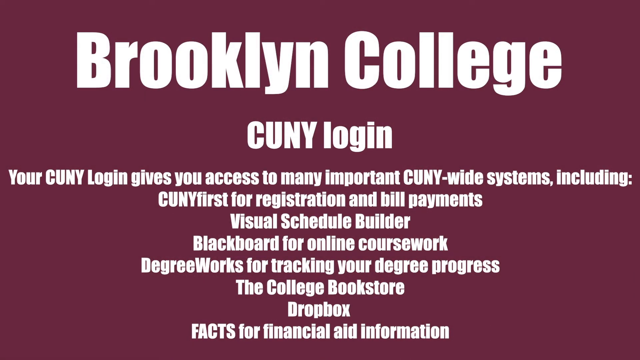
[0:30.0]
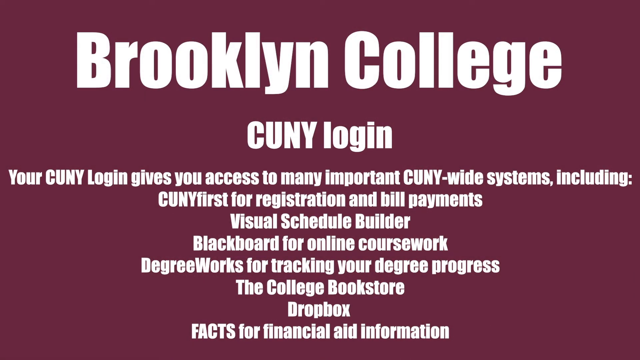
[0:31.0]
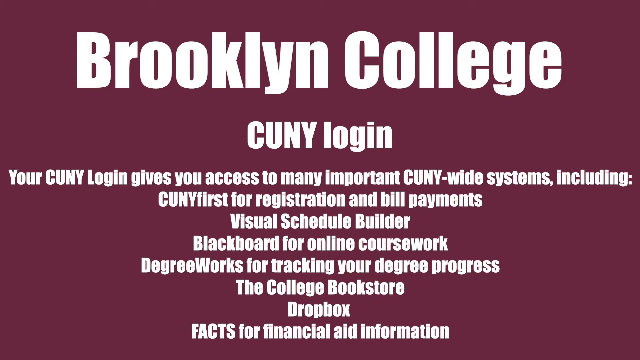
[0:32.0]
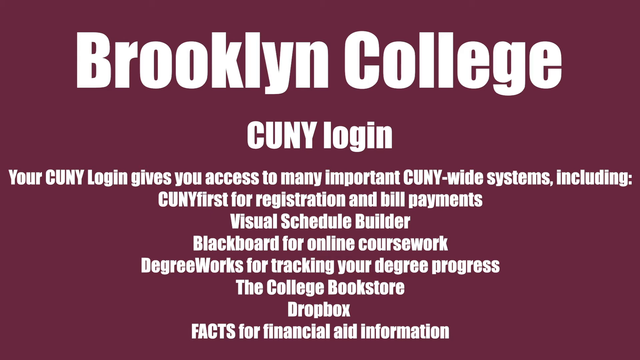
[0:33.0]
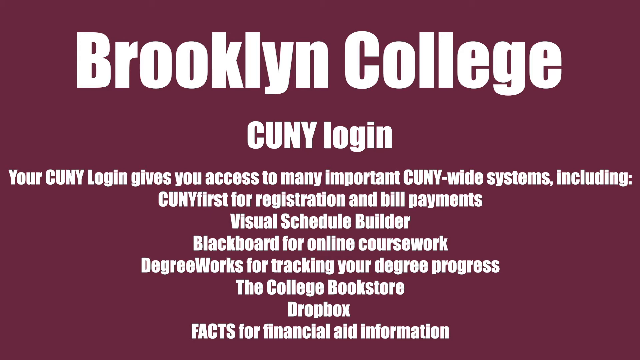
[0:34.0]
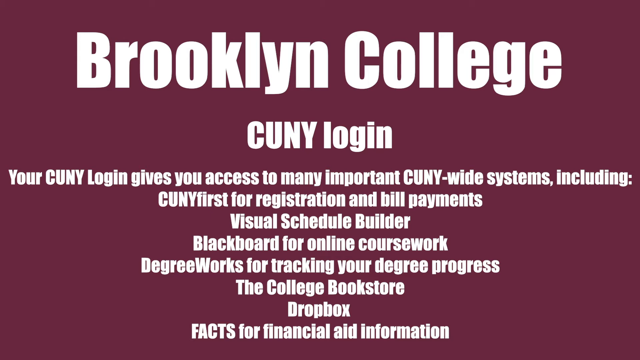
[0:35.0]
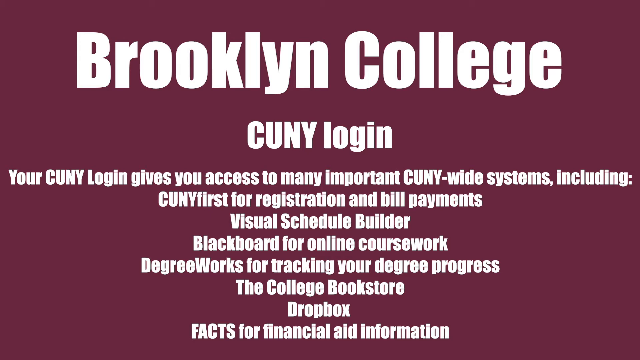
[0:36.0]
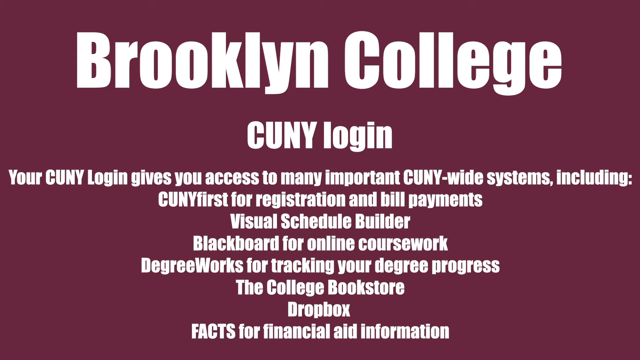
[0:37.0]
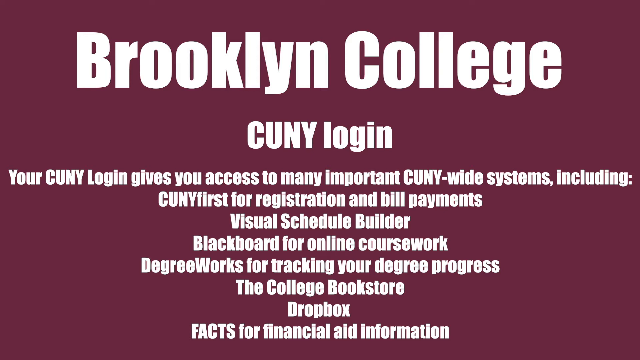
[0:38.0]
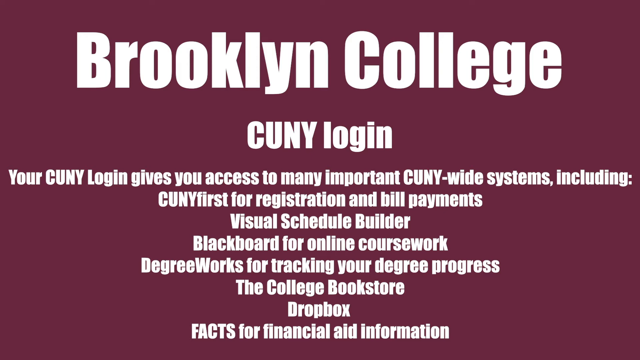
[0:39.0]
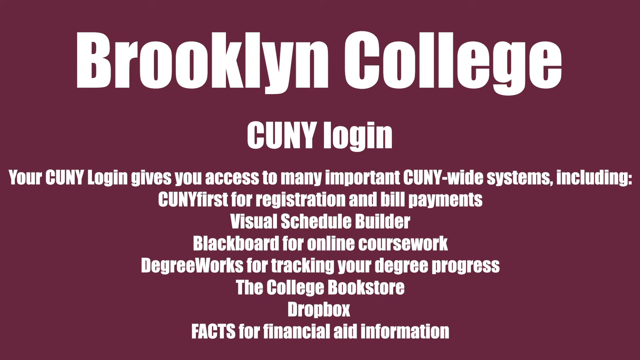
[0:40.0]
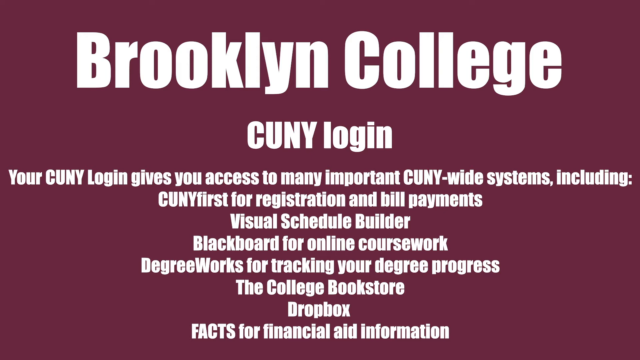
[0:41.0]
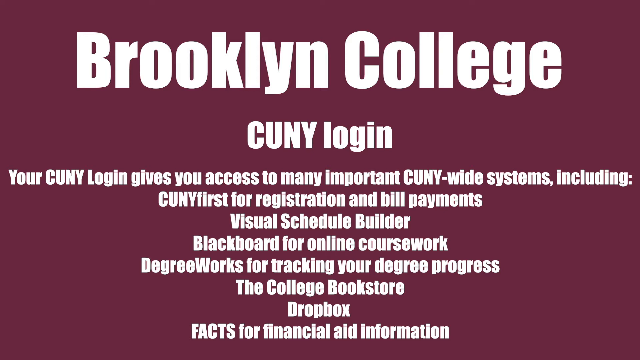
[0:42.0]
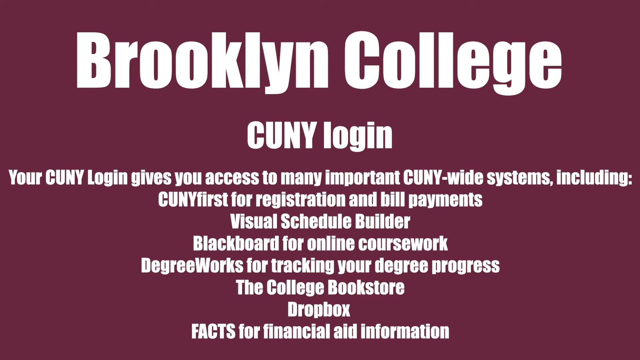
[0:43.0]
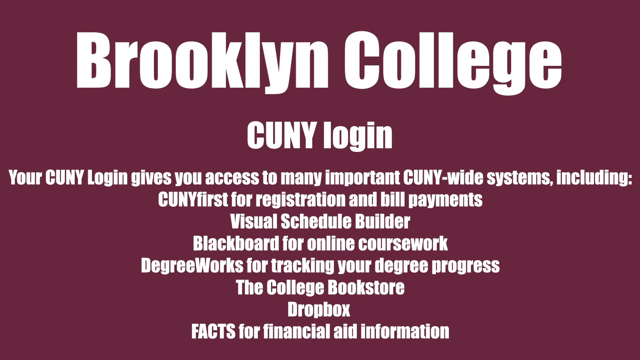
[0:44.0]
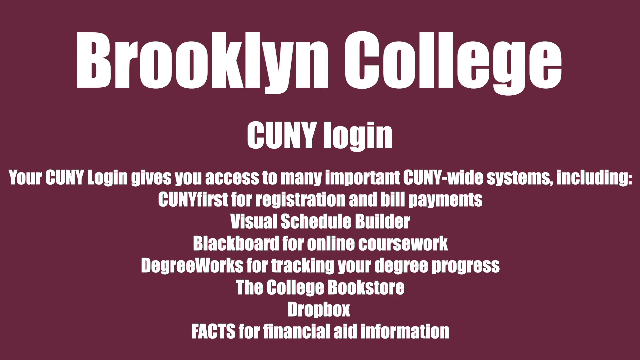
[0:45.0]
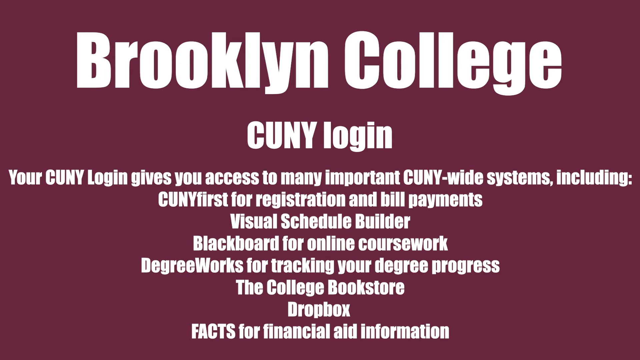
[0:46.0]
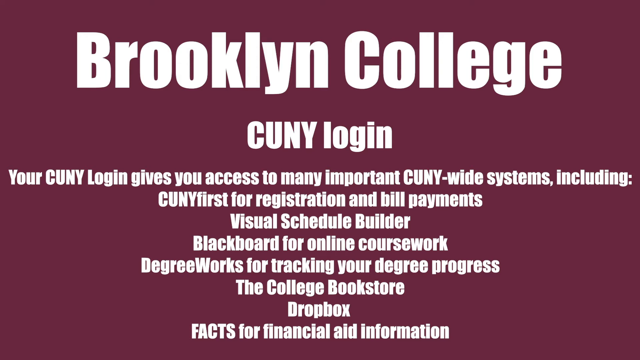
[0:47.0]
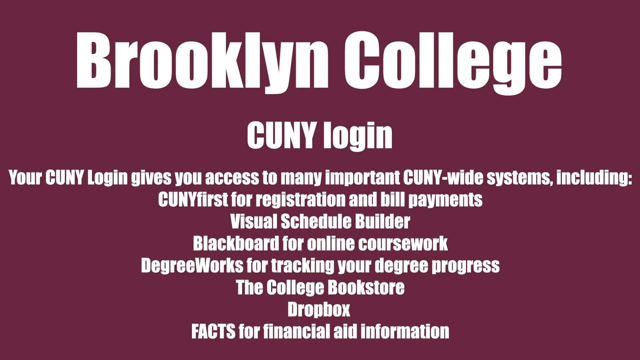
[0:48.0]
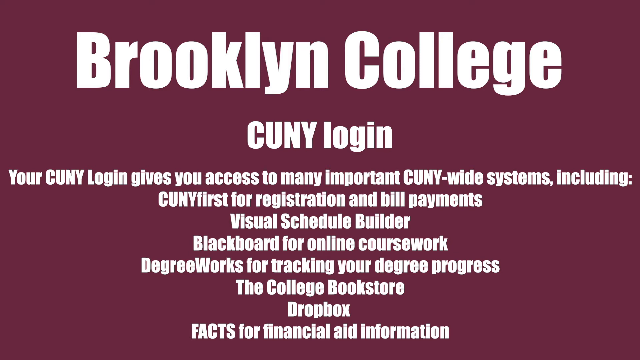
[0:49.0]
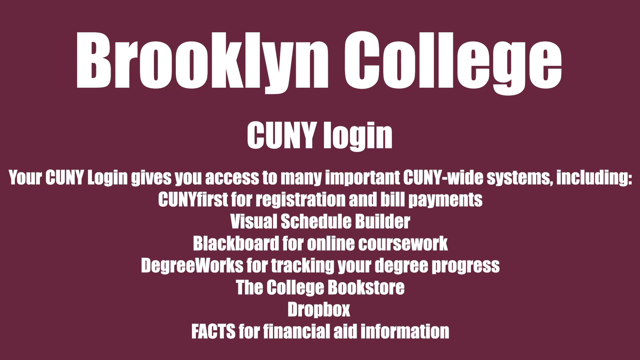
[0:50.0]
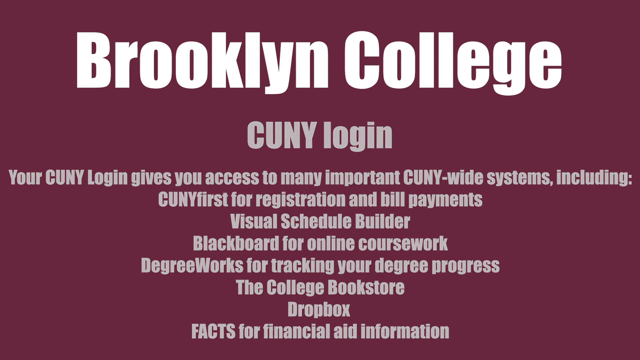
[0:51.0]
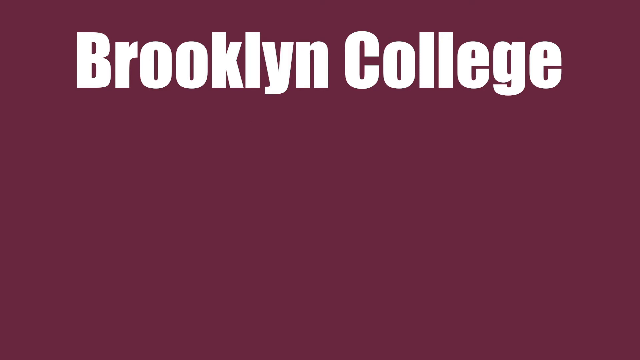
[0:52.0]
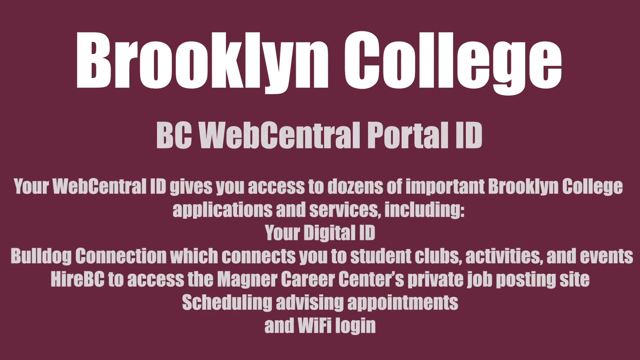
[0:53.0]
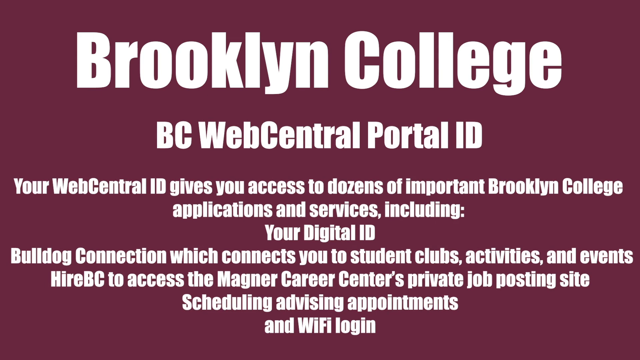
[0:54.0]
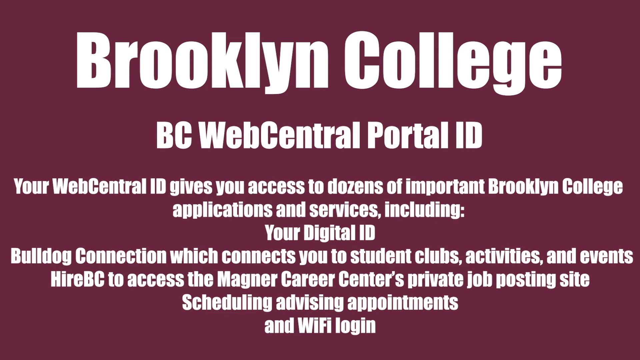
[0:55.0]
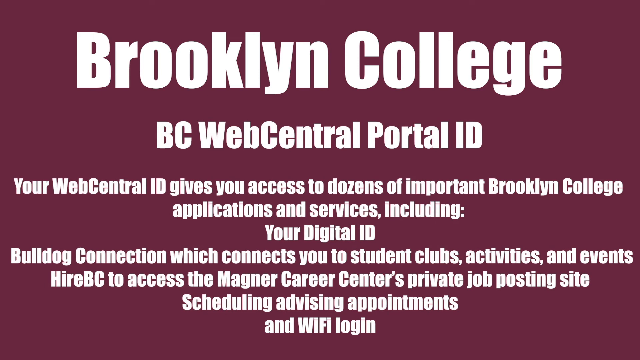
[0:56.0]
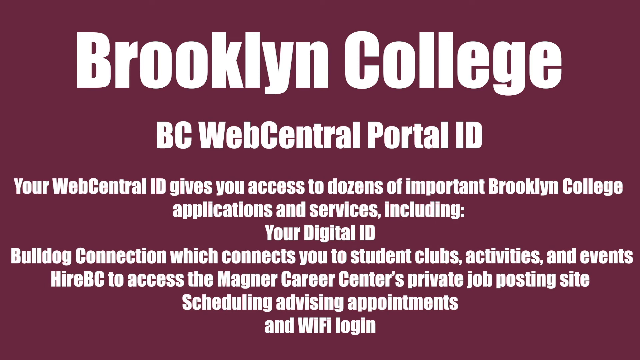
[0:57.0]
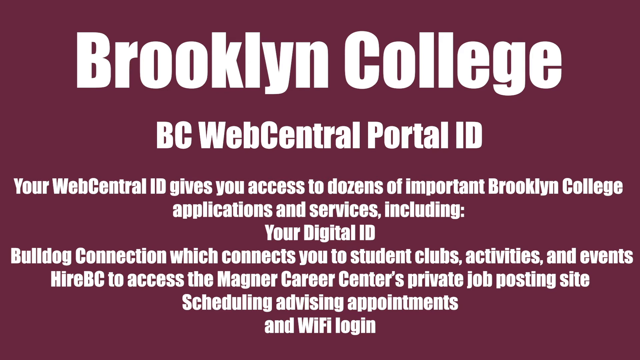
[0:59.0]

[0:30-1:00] The ad about the CUNY login continues, listing what it includes: "Visual Schedule Builder," "Blackboard for online coursework," an item for tracking degree progress, "the College Bookstore," "Dropbox," and "BC Web Central Portal ID." The ad then transitions to a new section about the BC Web Central Portal ID, which says "Your Web Central ID gives you access to dozens of important Brooklyn College applications and services including your digital ID," along with a service that connects you to student clubs, activities, and events.